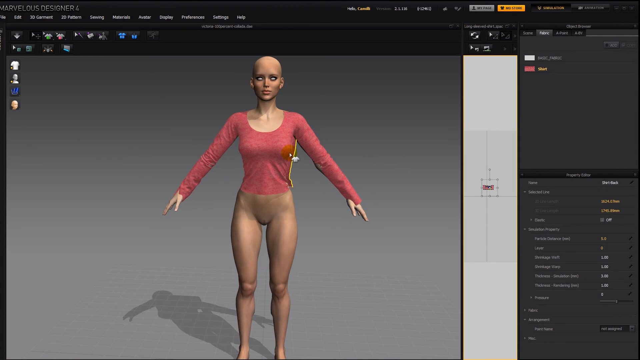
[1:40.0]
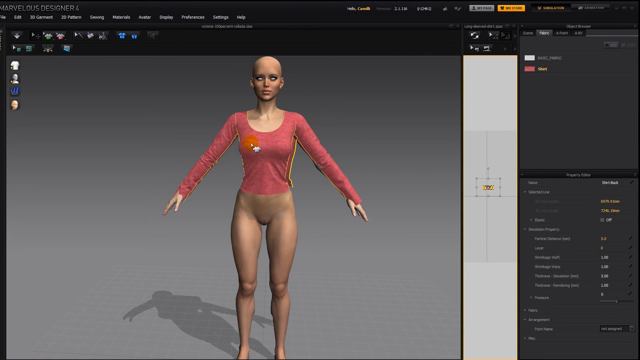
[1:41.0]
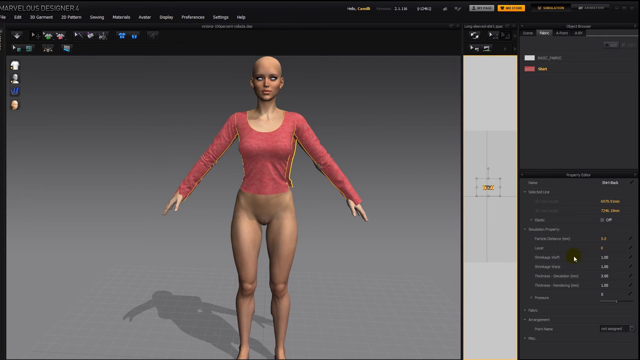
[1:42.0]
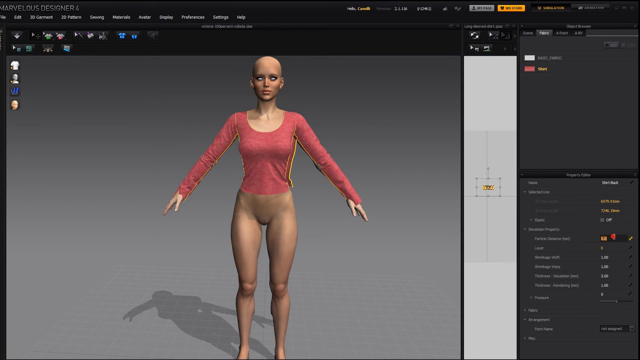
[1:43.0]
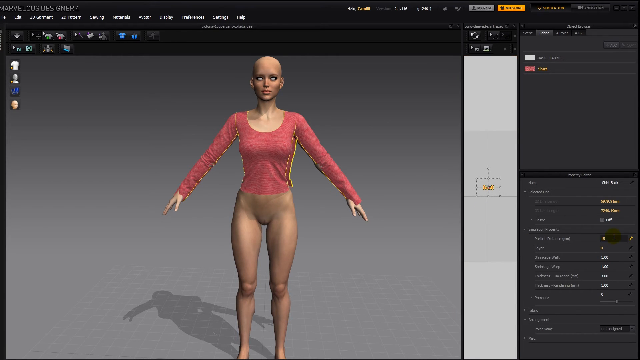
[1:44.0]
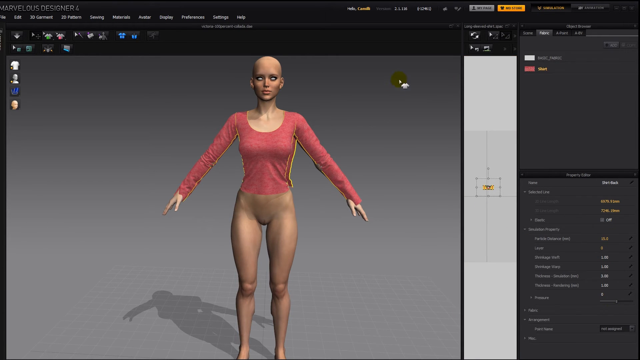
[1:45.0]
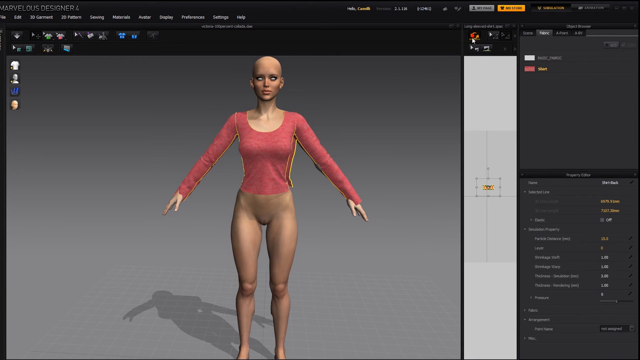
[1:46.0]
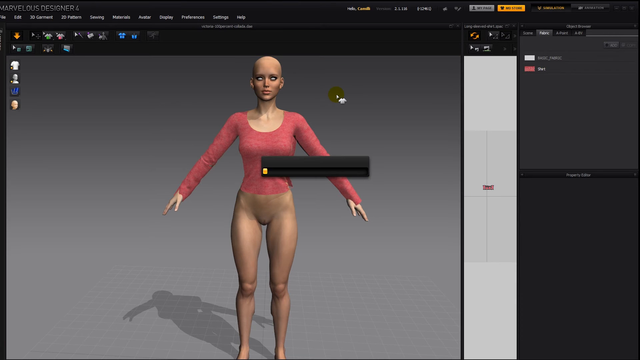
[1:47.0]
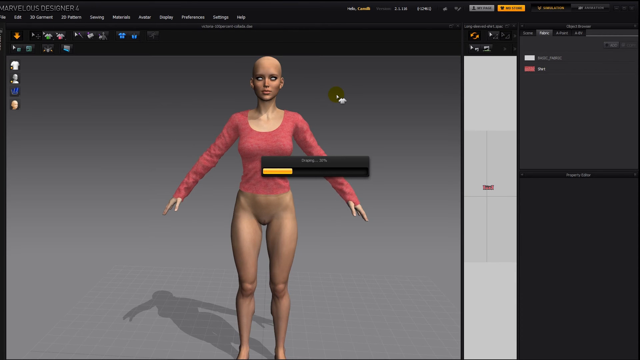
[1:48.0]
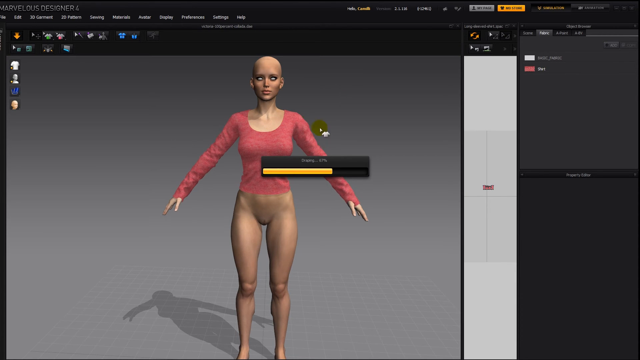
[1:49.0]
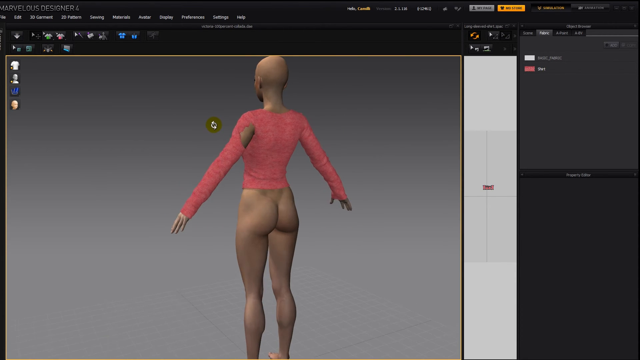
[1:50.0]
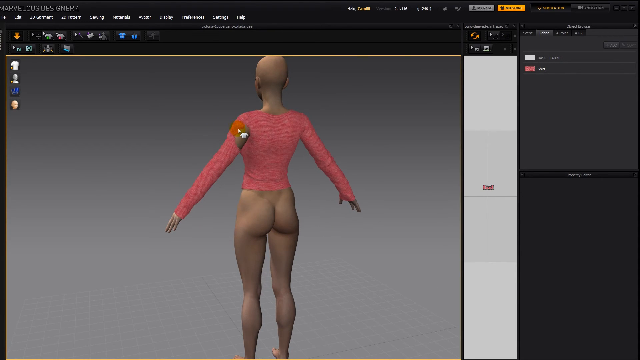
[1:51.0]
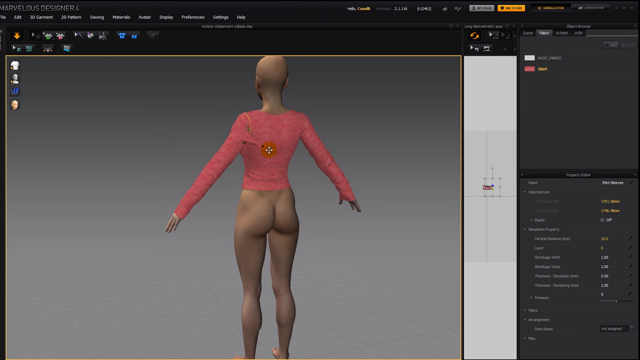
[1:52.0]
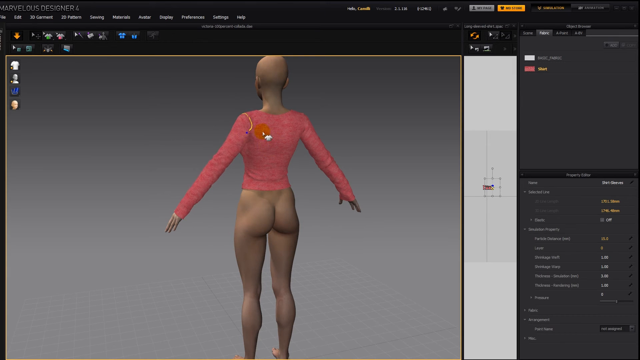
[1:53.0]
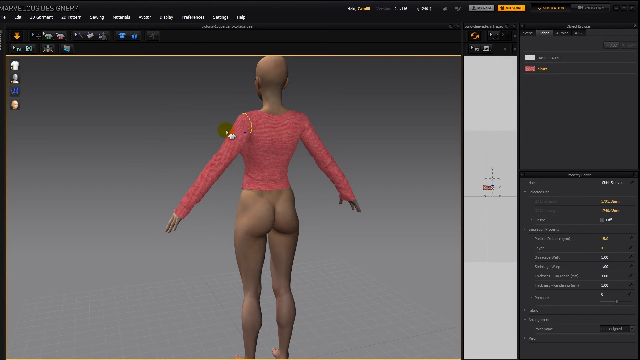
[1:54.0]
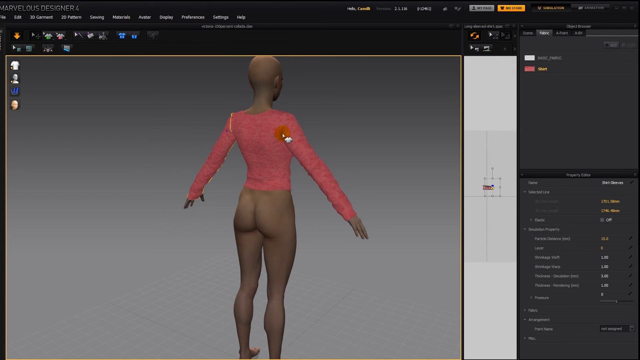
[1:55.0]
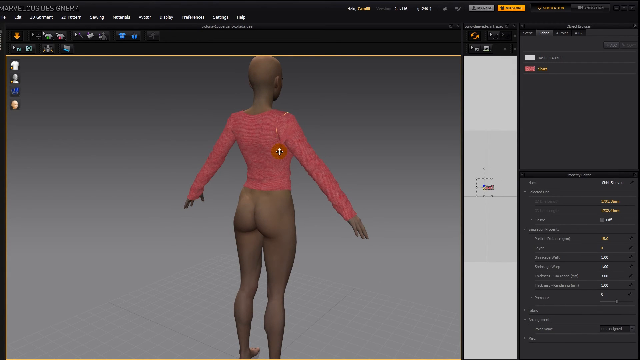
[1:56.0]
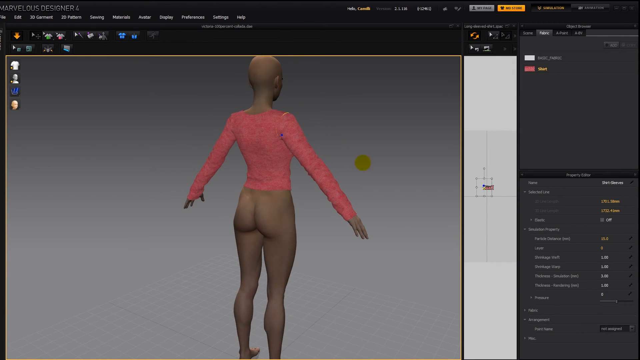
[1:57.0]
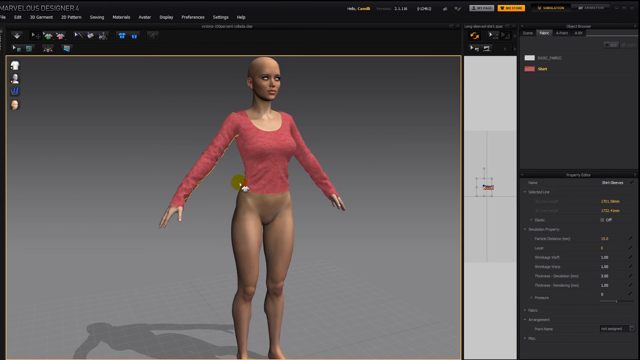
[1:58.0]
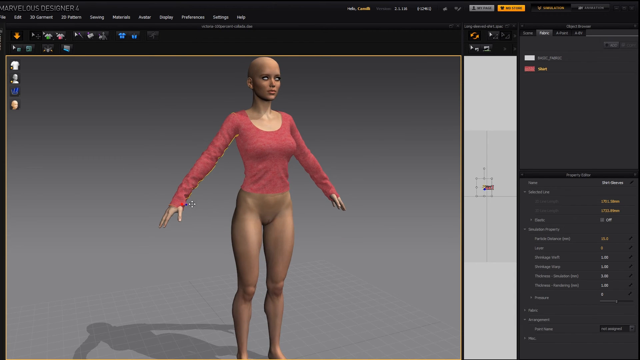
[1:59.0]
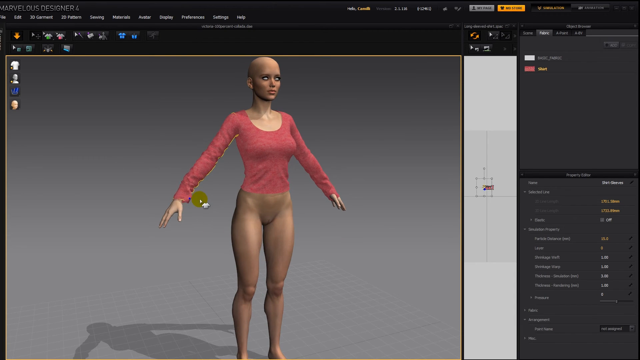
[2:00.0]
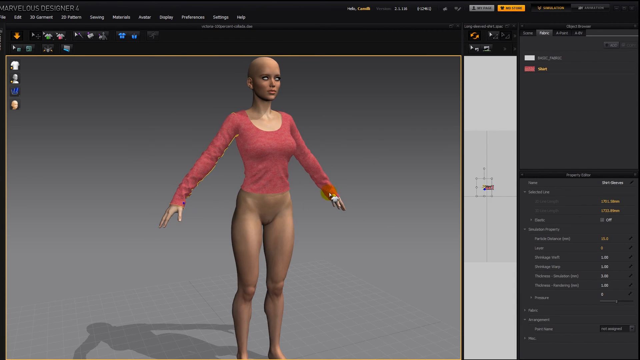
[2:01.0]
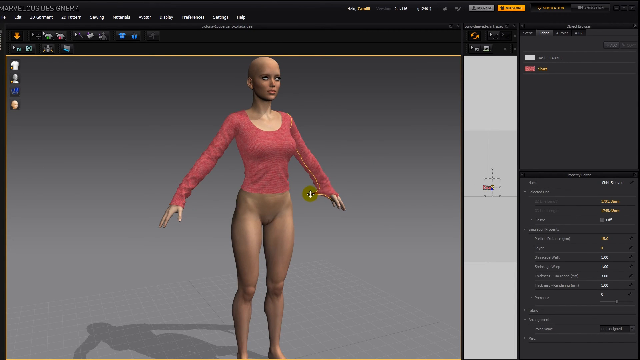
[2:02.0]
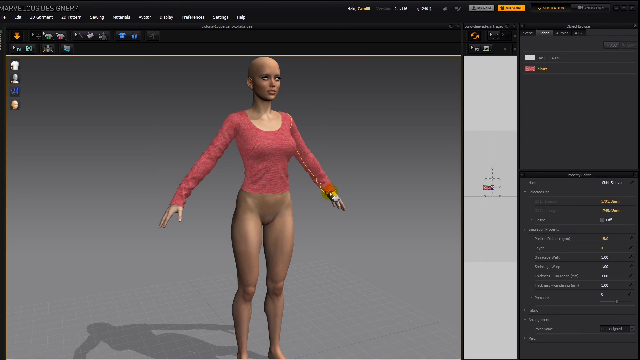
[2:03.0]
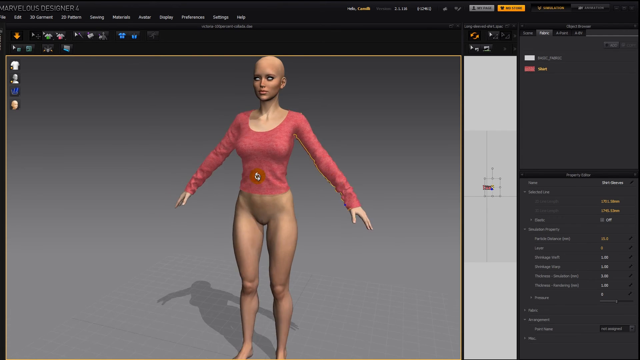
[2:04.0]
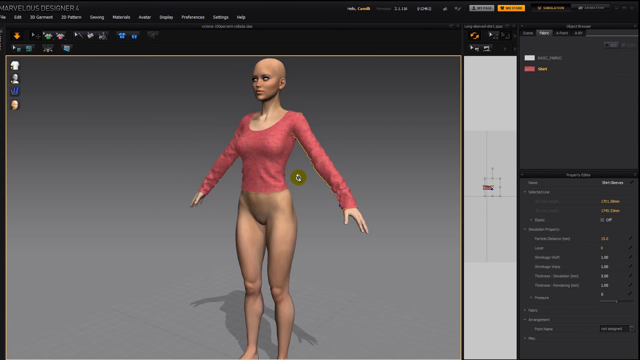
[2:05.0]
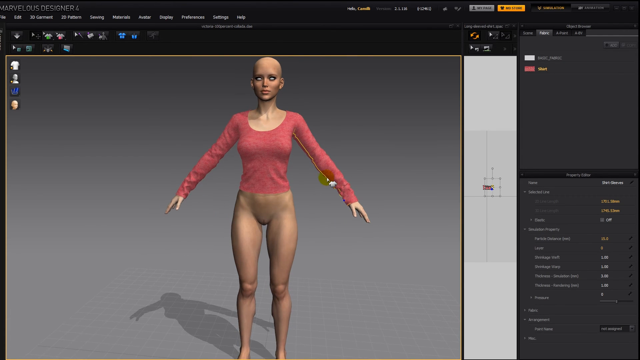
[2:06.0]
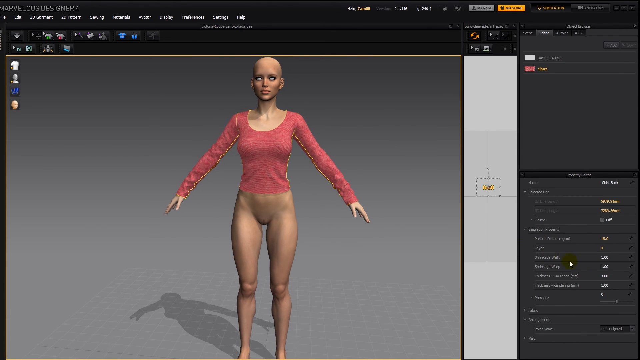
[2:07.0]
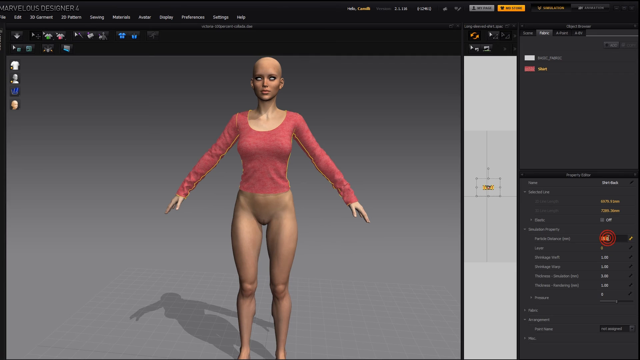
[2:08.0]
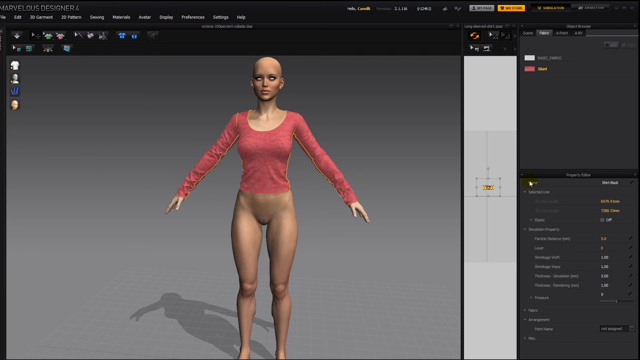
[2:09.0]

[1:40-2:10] The animator shows the front side, making sure her shirt covers her completely. Something is pressed and loads, and the view goes to her back side again. Her sleeves are carefully adjusted to fit over her shoulder blades, then the bottoms of the sleeves are adjusted as well. The shirt covers her entire arm length, her chest, her back side and her shoulder blades with no skin exposed. The shirt has many wrinkles where the joints of the body are, as well as creases, and everything is fit to size.